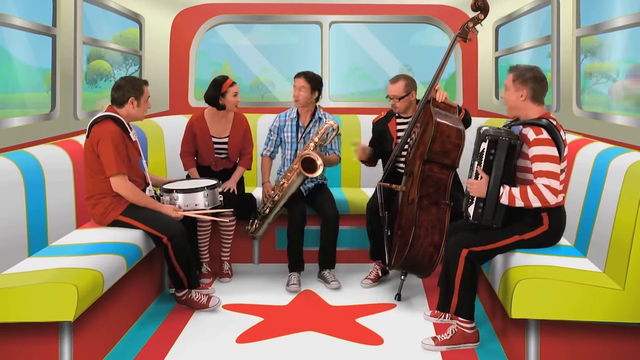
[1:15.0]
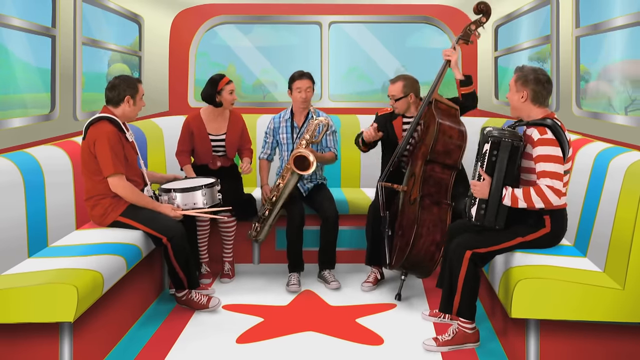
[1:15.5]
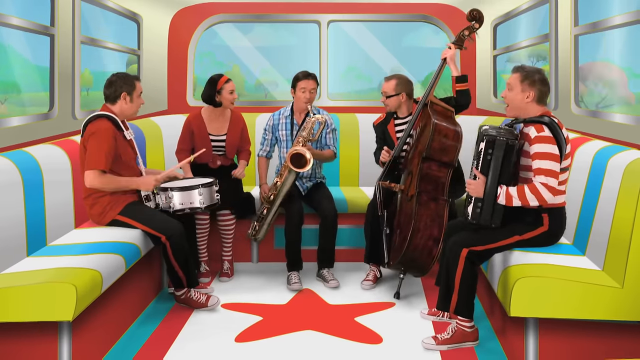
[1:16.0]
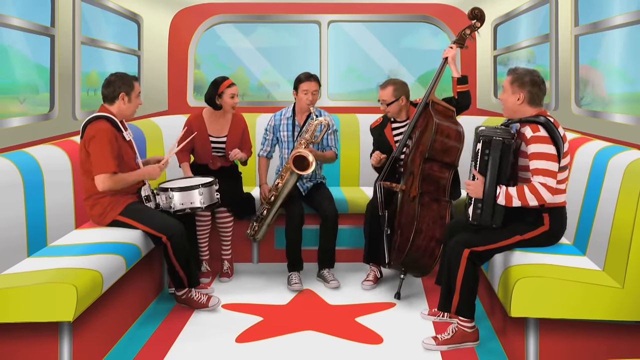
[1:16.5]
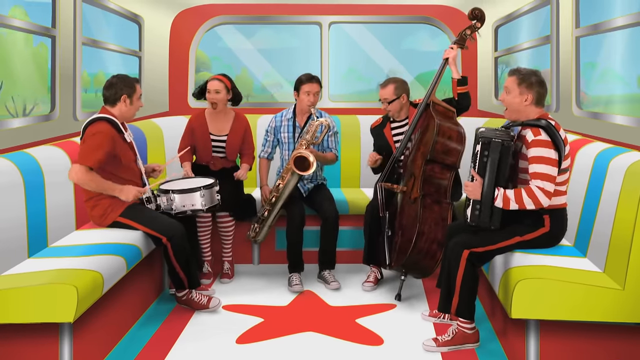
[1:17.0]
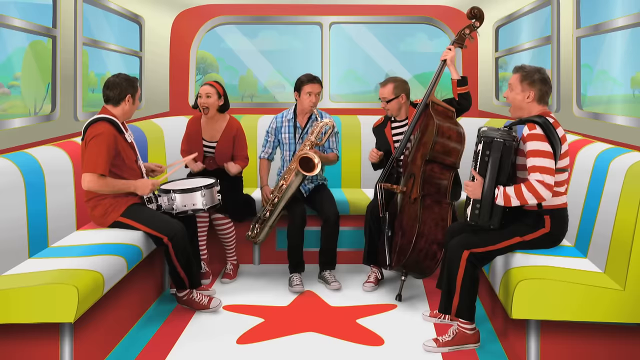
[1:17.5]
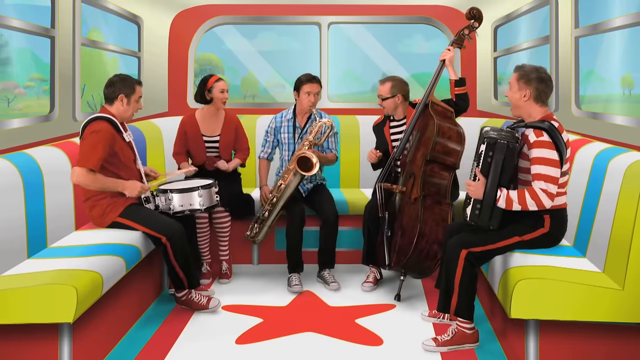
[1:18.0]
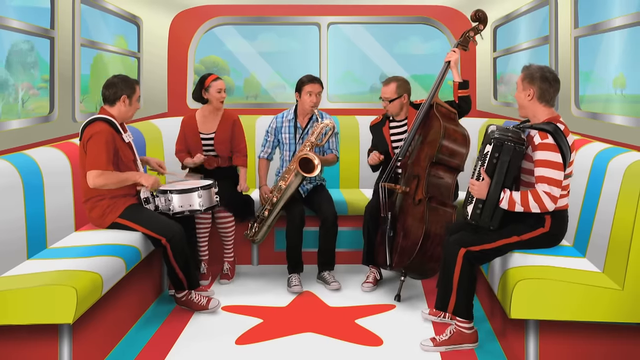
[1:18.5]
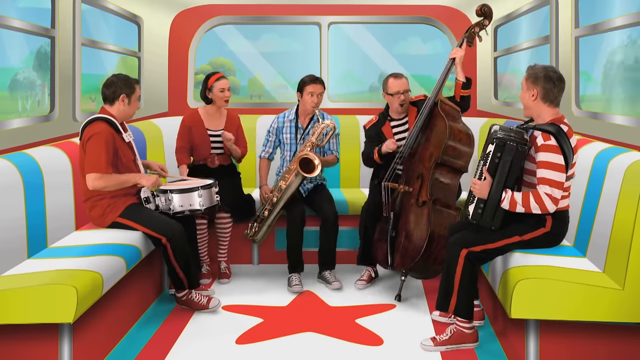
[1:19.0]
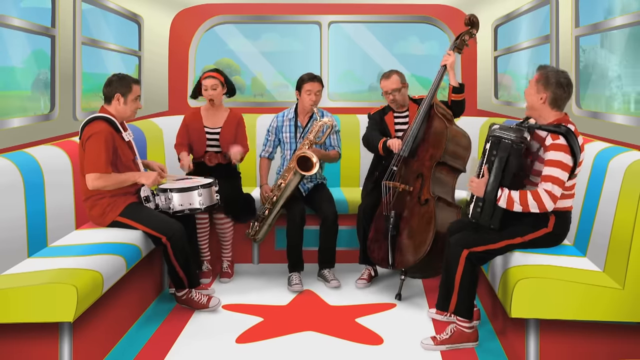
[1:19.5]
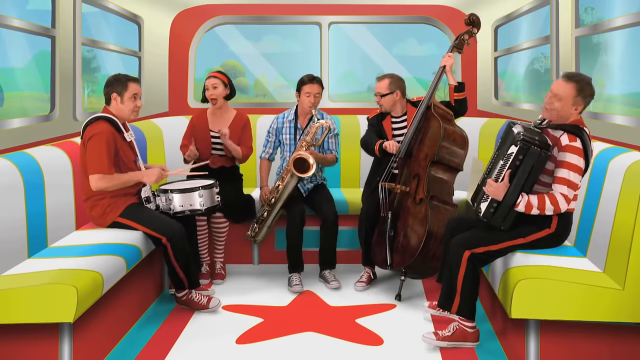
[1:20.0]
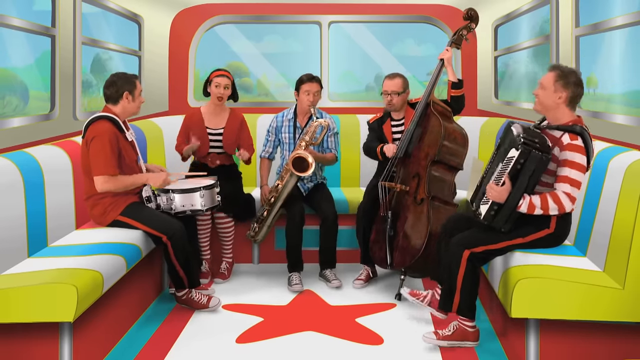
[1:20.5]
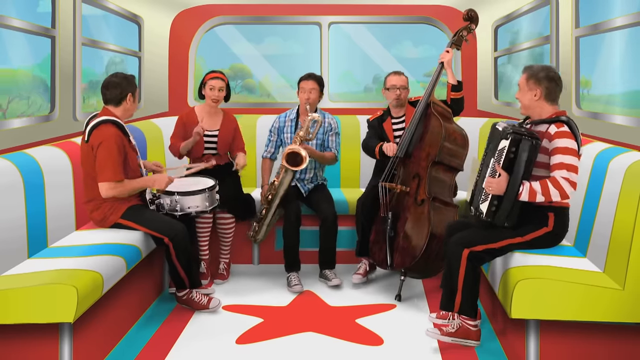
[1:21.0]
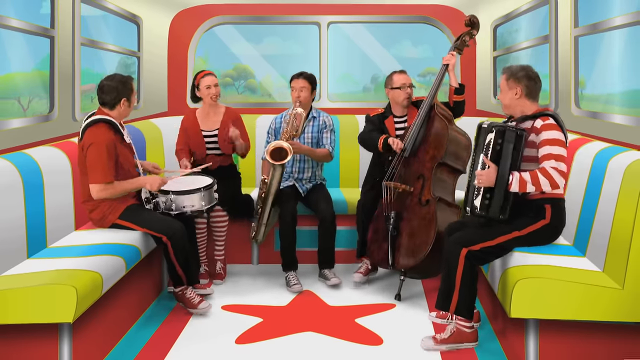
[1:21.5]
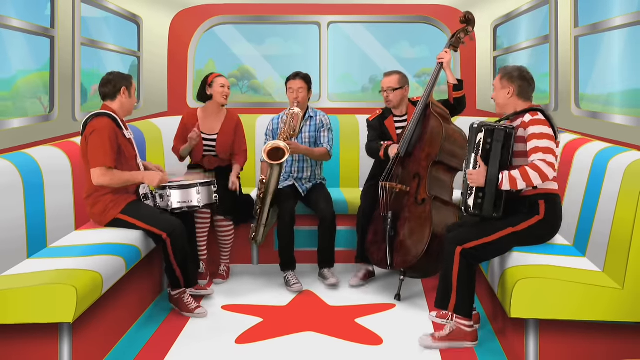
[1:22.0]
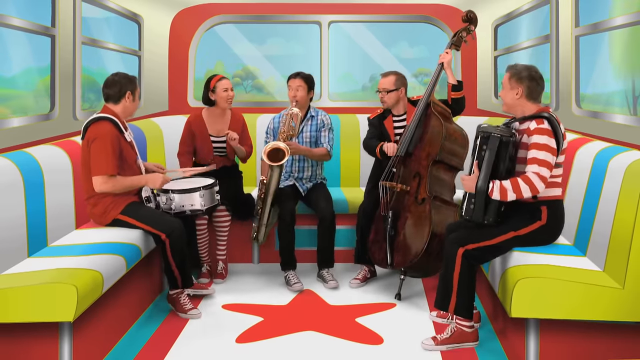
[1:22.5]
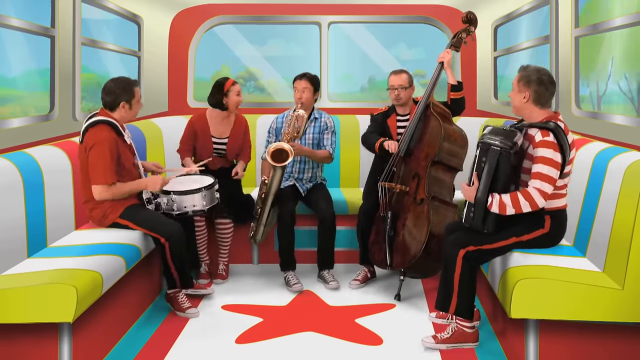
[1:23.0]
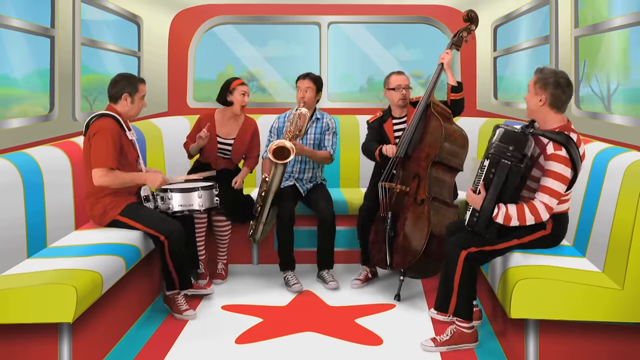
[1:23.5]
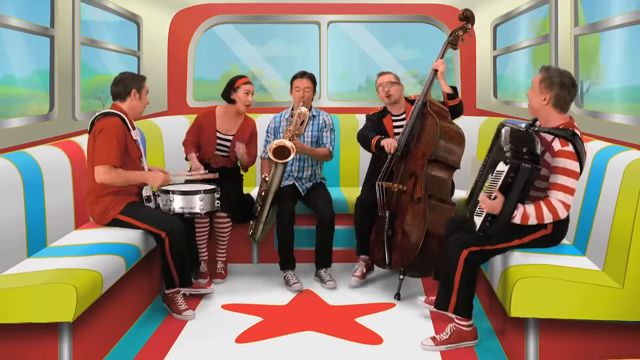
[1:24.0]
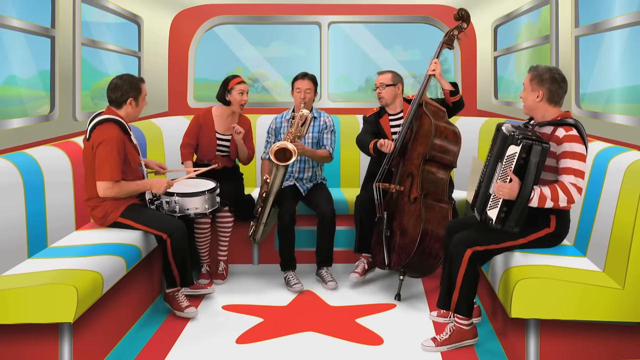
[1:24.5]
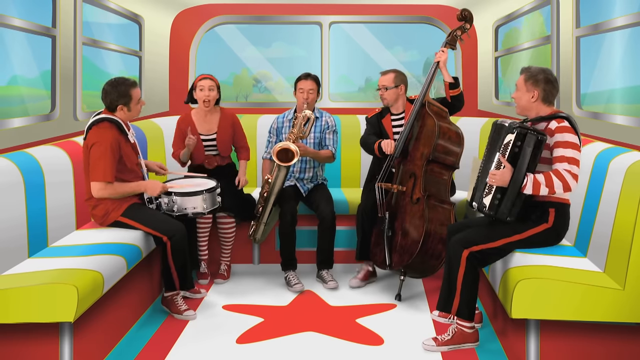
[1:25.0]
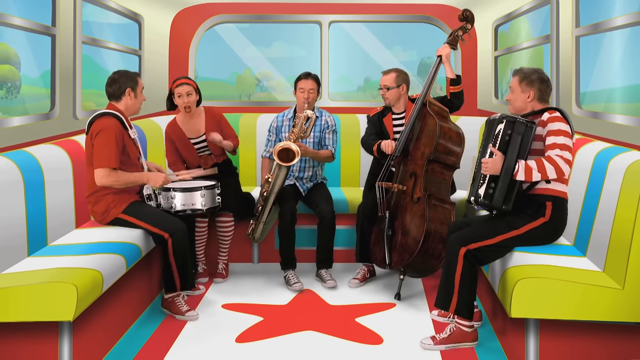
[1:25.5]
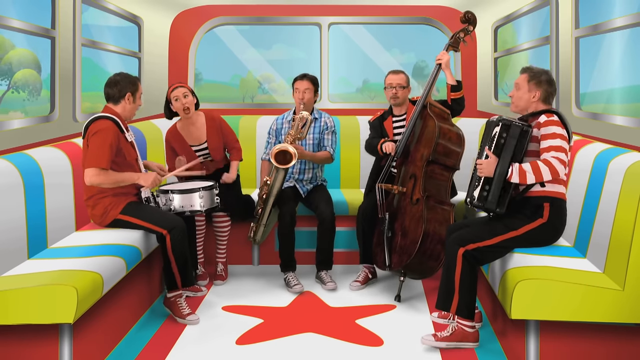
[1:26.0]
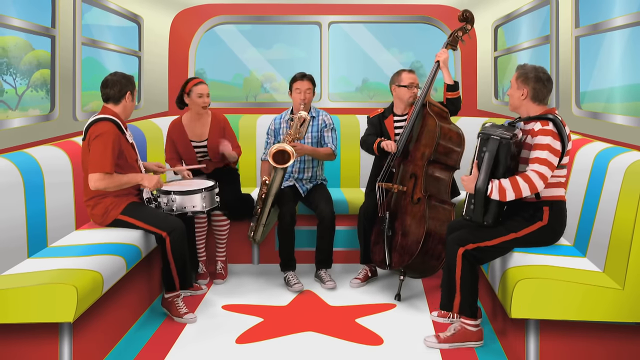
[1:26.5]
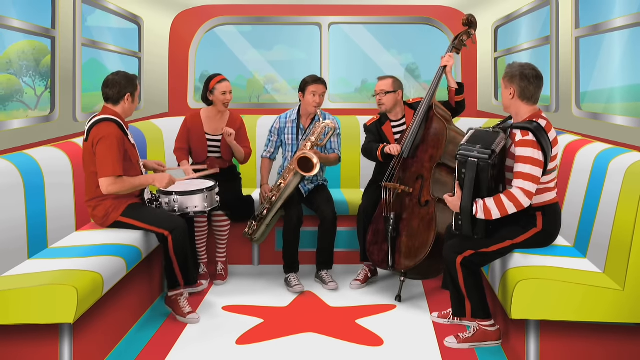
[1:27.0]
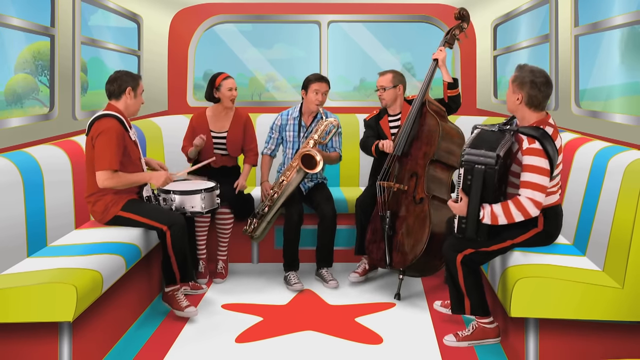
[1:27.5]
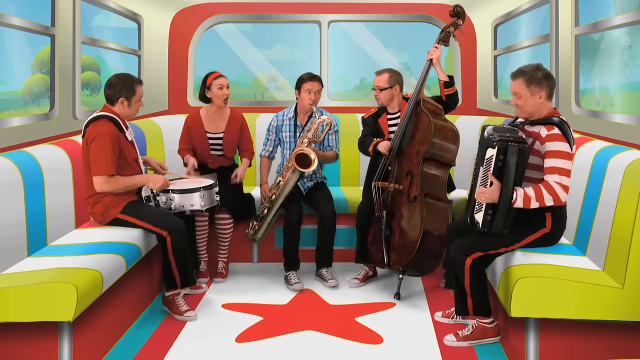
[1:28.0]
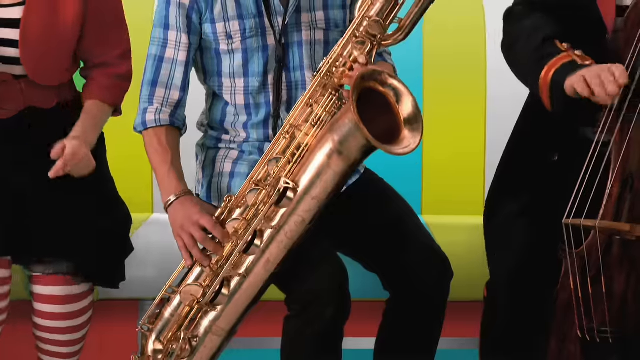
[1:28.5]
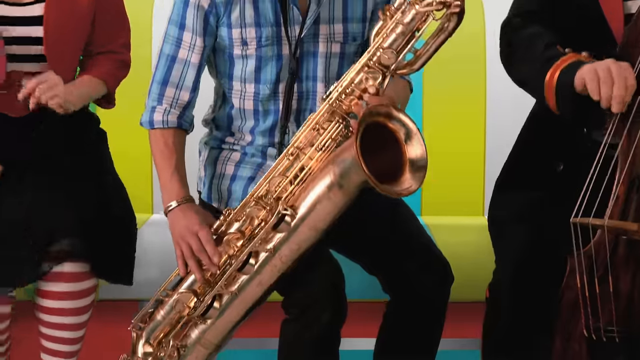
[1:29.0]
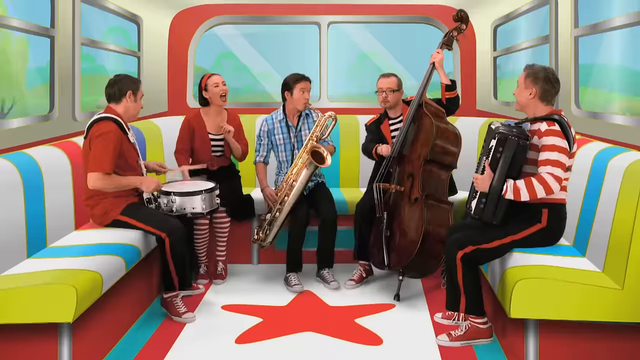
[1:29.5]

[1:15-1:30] On the bus, the band members look like real people sitting in an animation that looks computer-generated. They are now finally playing music together with their instruments: the drum, the saxophone, the bass cello and the accordion, while the woman seems to be singing, and they all jive away. When the saxophone appears, it does not necessarily look real. Only the band in the back of the bus is shown, playing their instruments; the men do not look like they are singing. Outside, trees pass by under a blue sky with white clouds, showing the bus is still moving, and the band members all seem to be having a good time.